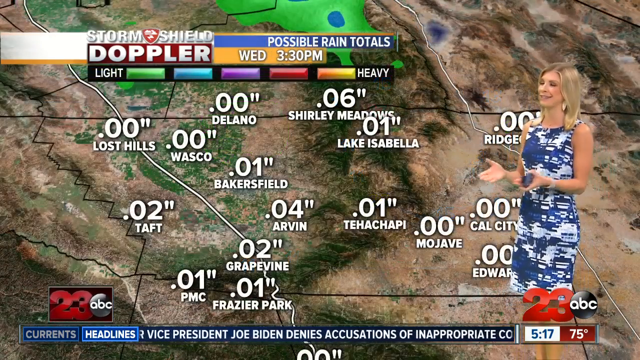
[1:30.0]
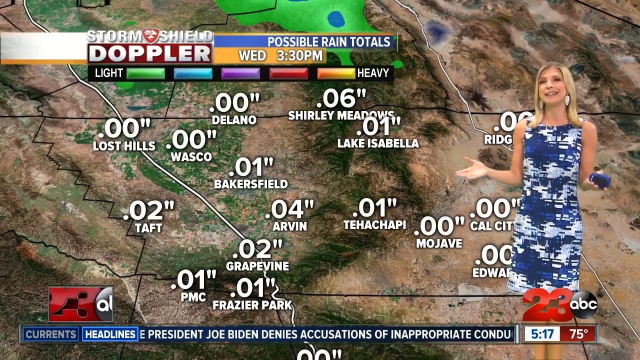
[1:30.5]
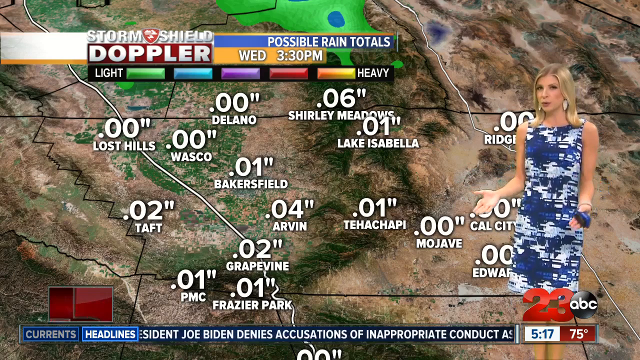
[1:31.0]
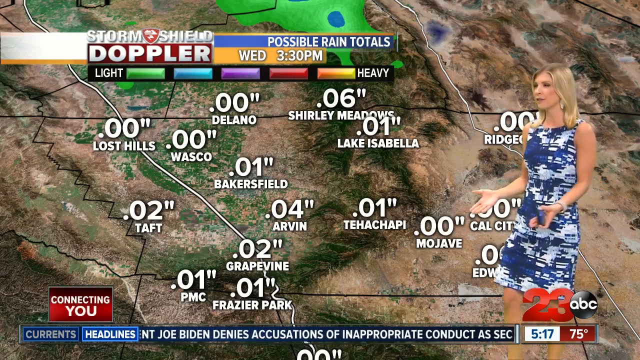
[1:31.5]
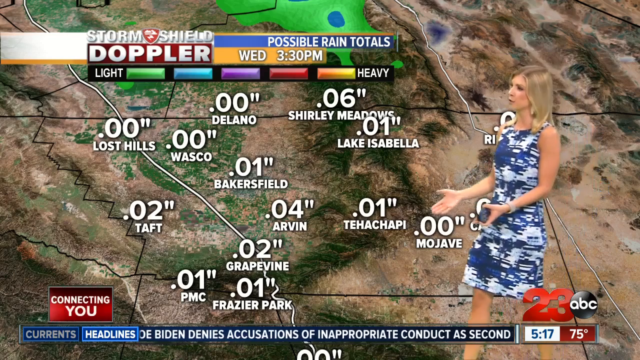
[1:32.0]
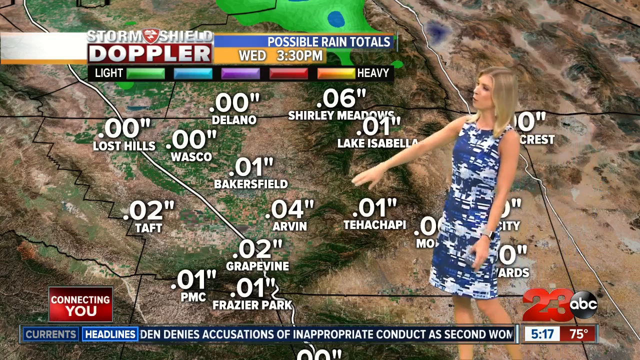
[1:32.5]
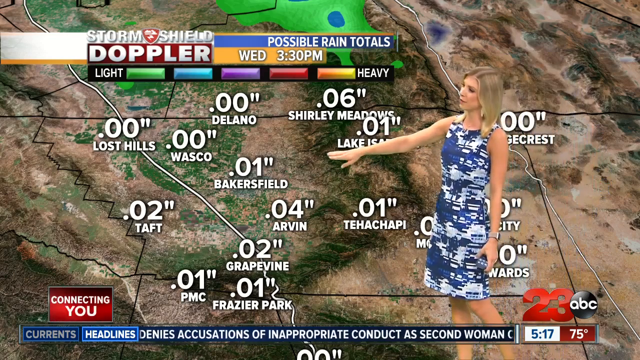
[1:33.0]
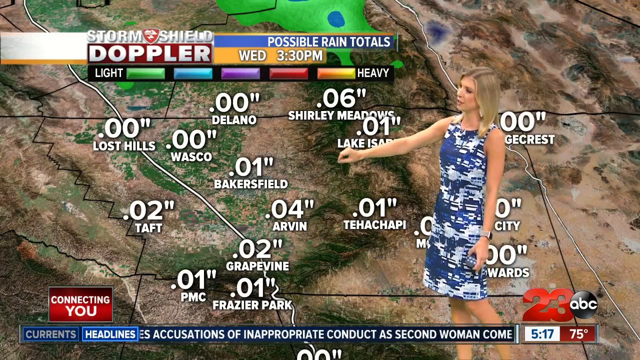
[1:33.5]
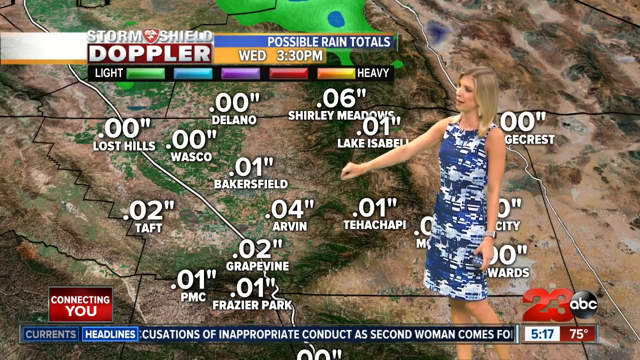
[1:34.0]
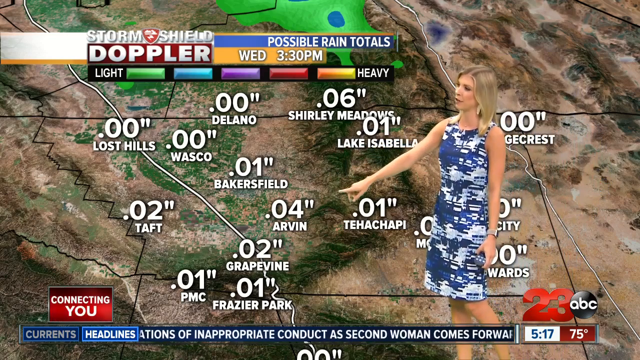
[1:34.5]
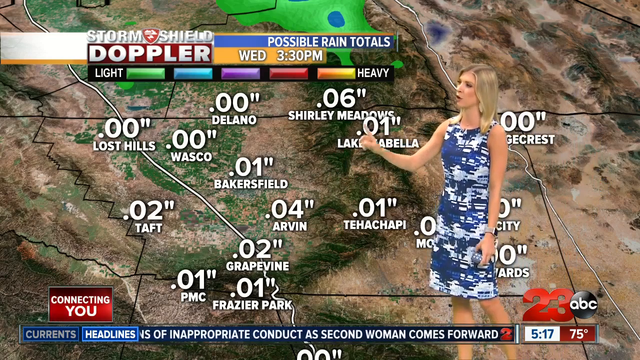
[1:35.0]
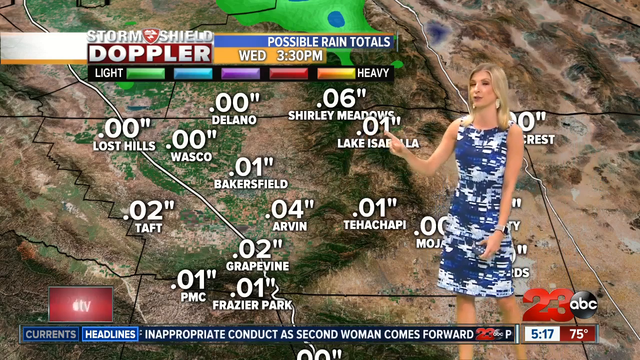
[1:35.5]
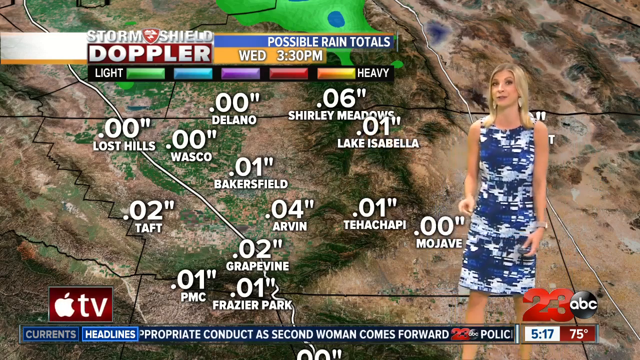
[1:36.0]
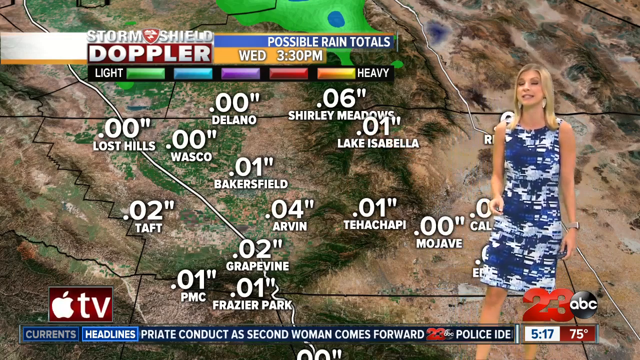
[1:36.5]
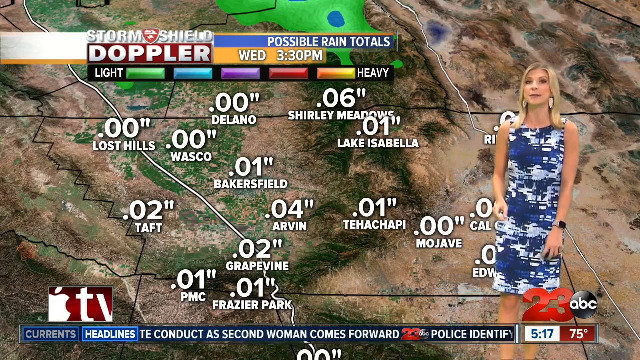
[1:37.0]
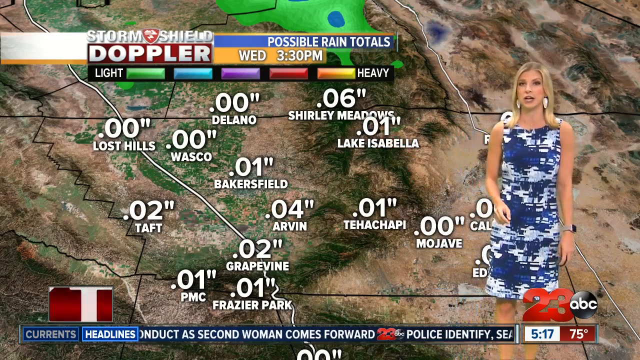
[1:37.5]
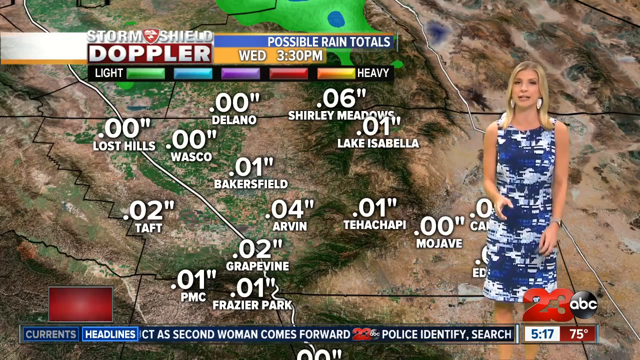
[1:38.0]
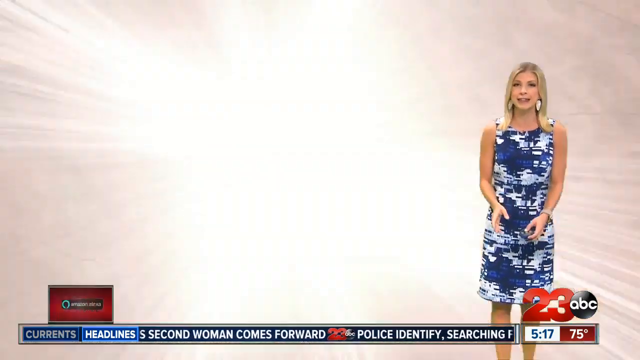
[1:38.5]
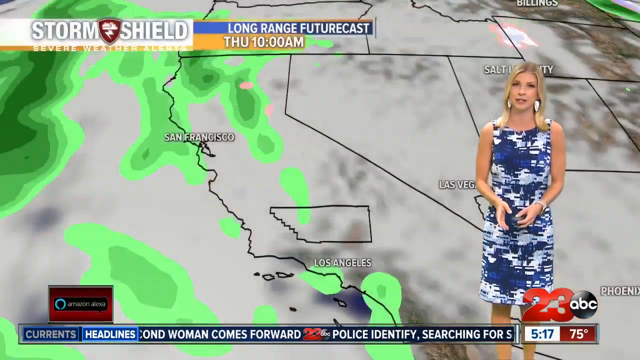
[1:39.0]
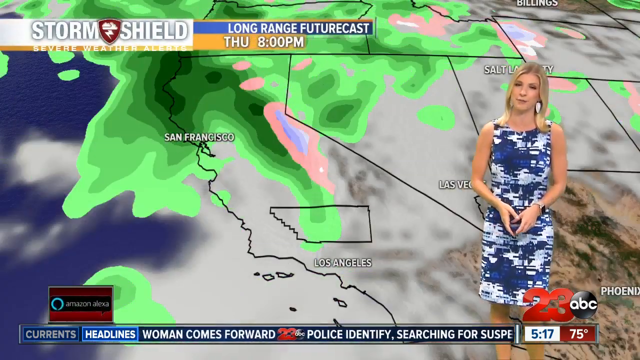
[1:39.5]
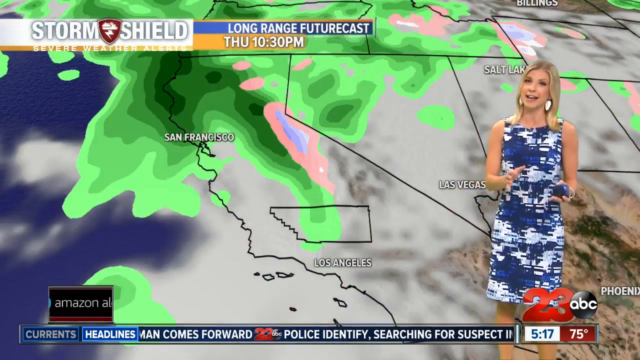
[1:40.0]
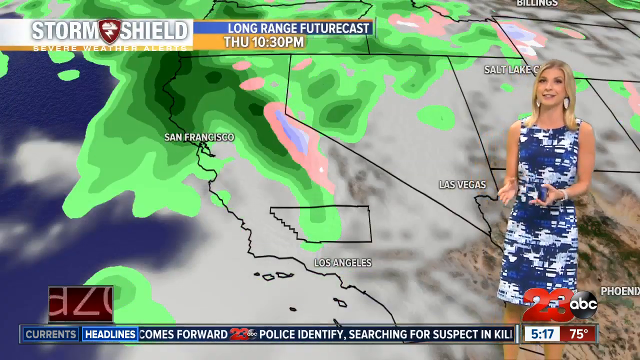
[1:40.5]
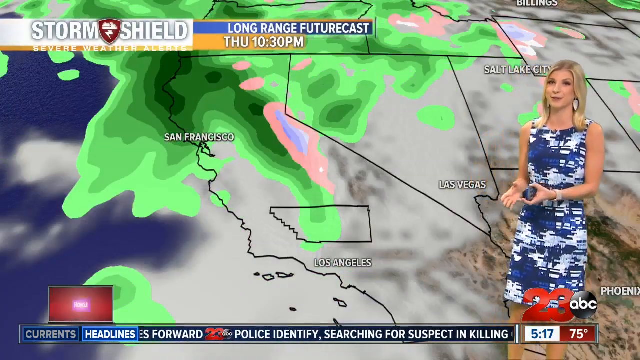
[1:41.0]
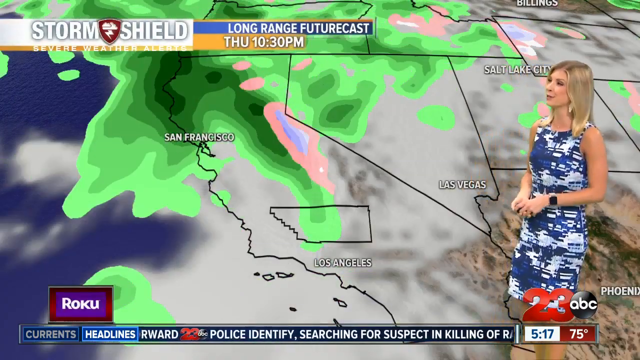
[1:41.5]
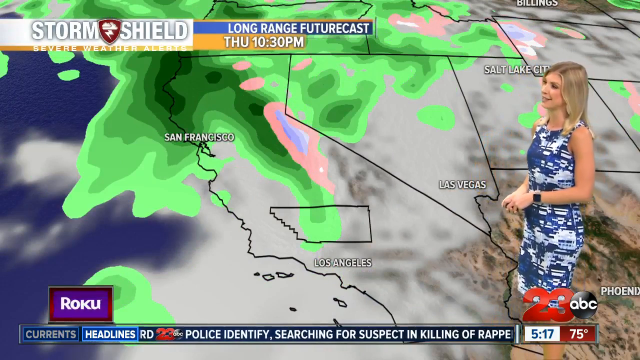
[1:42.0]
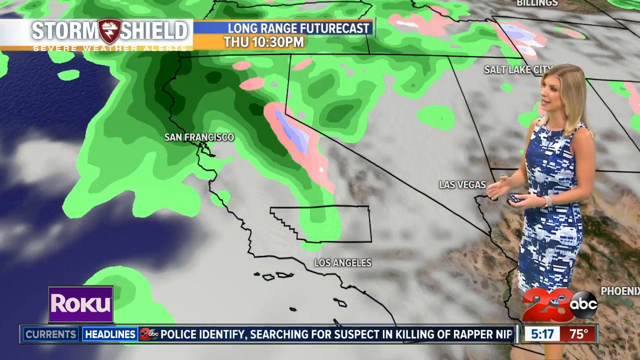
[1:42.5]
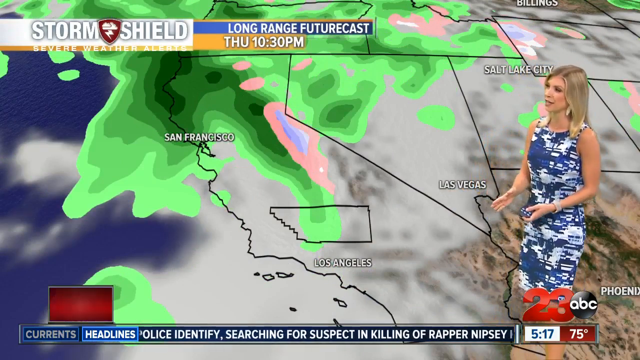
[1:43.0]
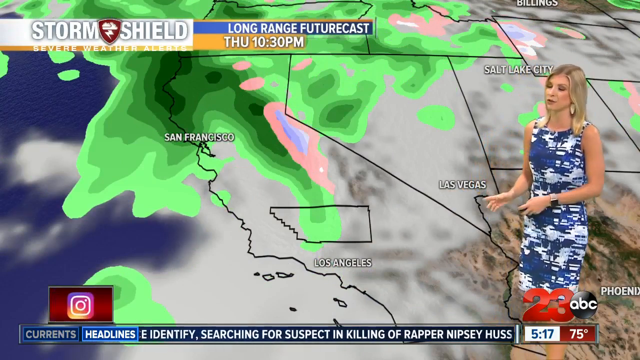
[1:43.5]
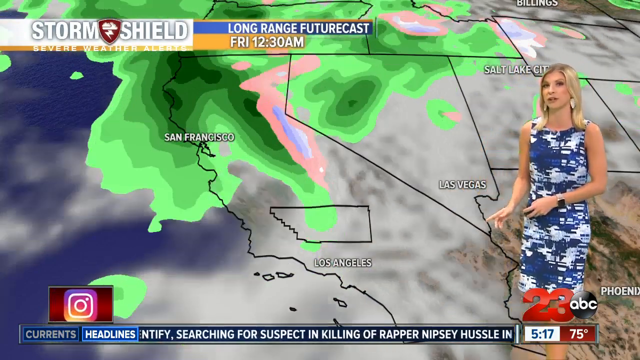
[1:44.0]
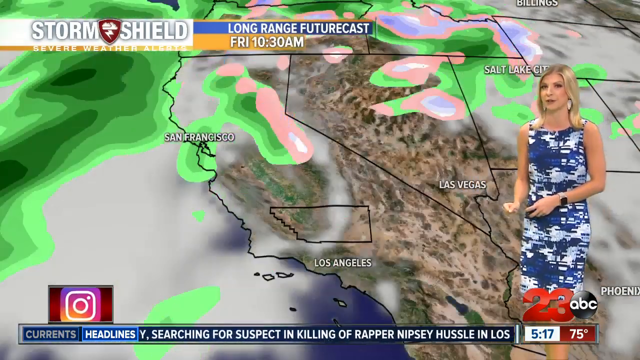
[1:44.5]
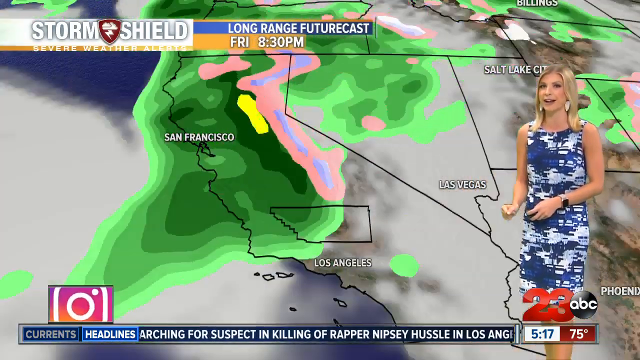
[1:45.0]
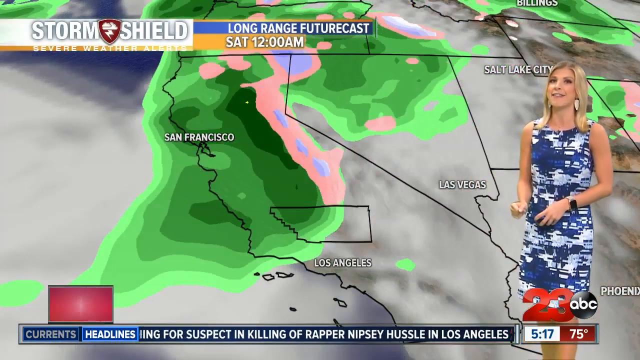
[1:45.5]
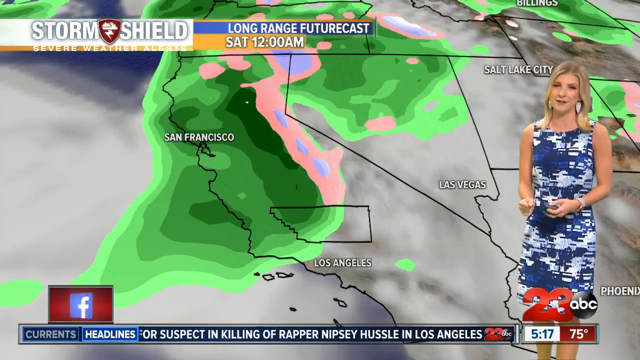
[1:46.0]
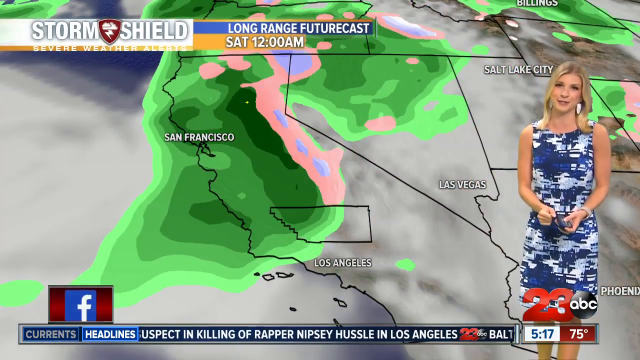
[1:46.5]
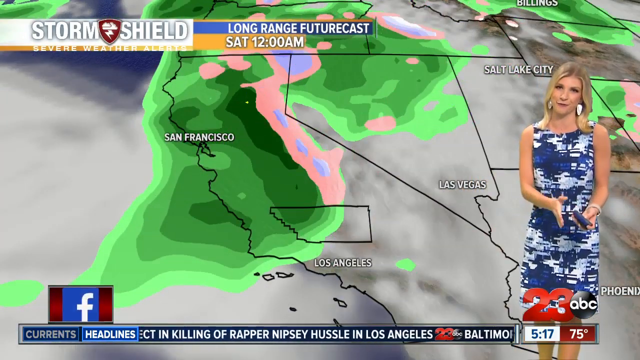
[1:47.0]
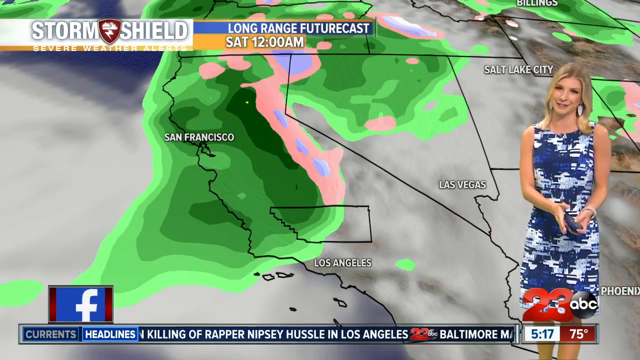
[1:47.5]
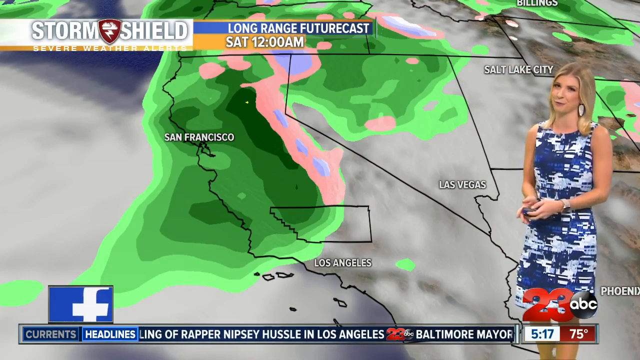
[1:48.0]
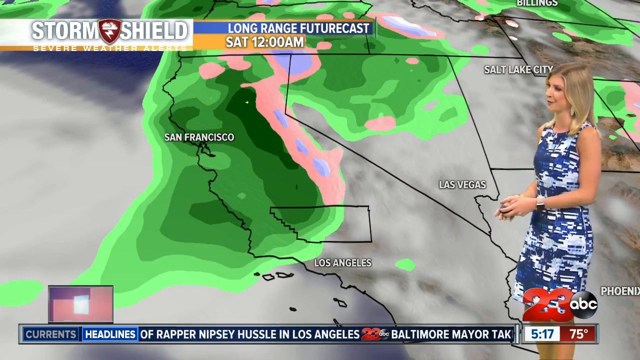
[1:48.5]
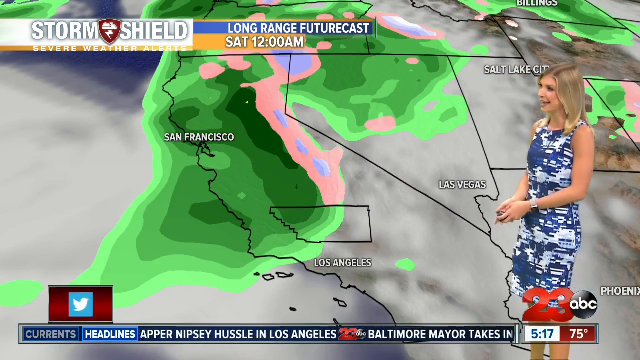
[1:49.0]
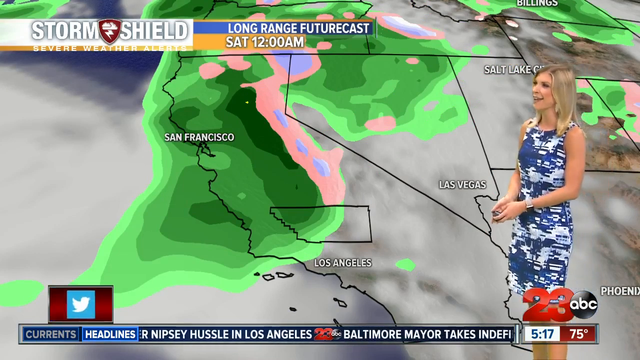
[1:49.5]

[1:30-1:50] The news anchor is still standing in front of the map, which appears to show rainfall. With her hand down, she appears to point to Arvin, marked 0.04%, and then her finger moves up to point at either Shirley Meadows at 0.06 or Lake Isabella at 0.01. The top of the map reads "possible rain totals" and shows Wednesday at 3:30, with a color-coded legend explaining the rainfall colors. The screen then switches to a view of Utah, Nevada and California, with a small area inside California somewhat marked out. To the north of California, up where San Francisco is, there appears to be a storm in greens and pinks moving toward the inner part of the United States. The news anchor stays in the bottom right corner, somewhat facing toward the graph.